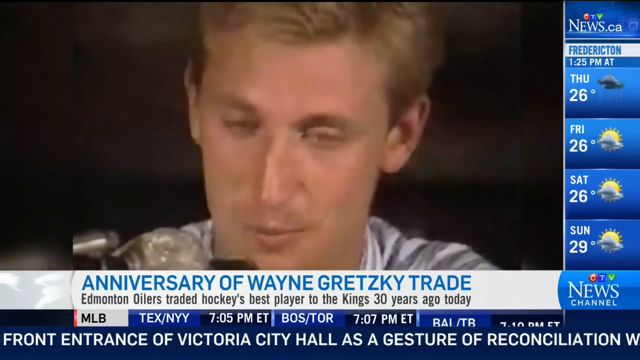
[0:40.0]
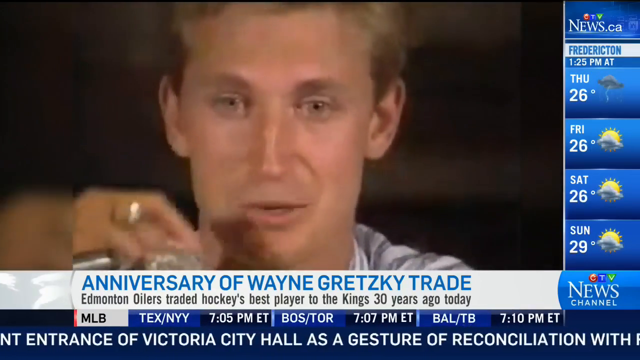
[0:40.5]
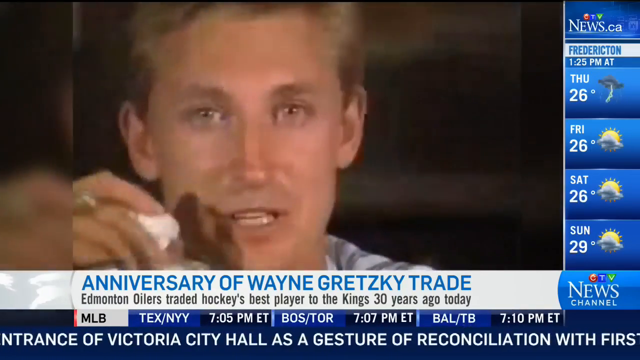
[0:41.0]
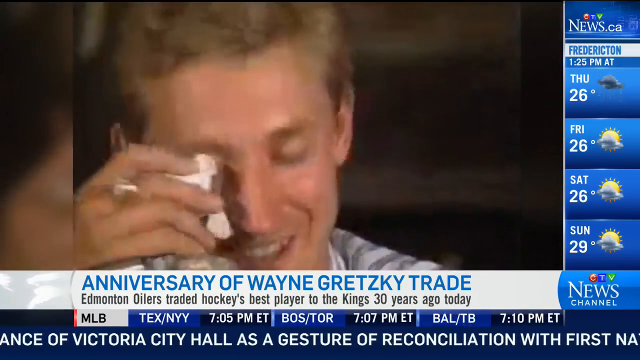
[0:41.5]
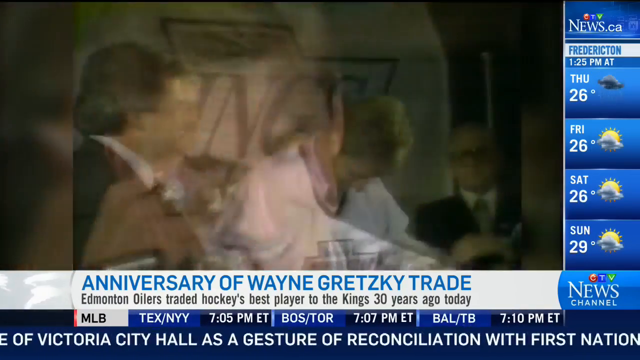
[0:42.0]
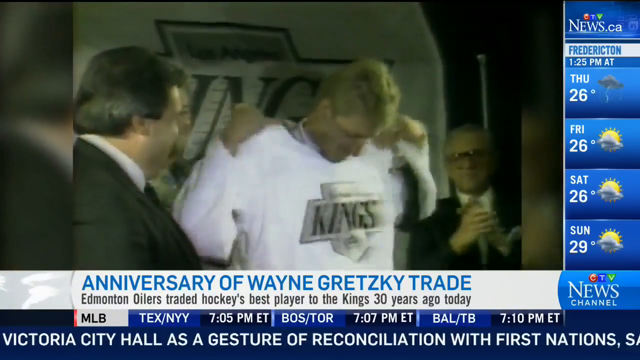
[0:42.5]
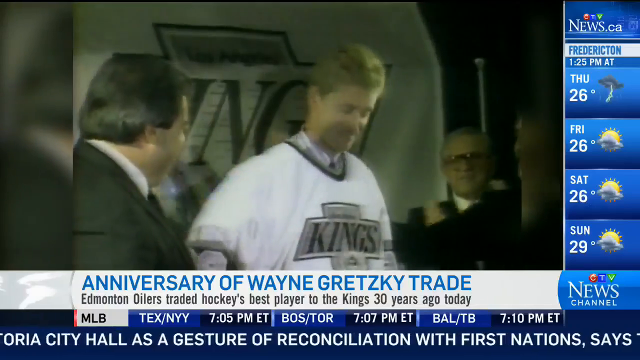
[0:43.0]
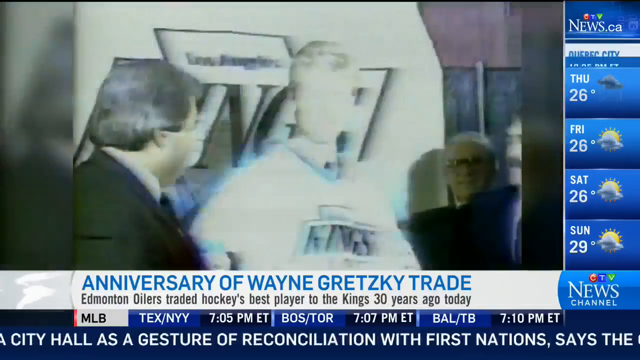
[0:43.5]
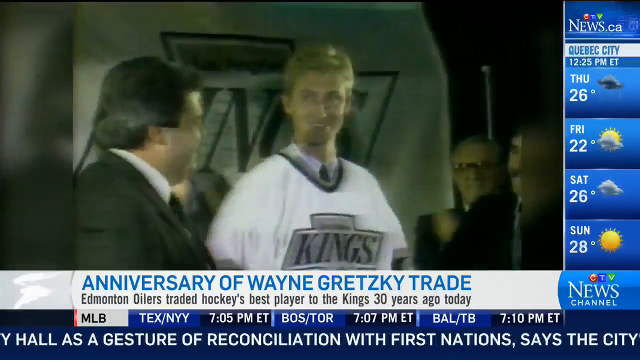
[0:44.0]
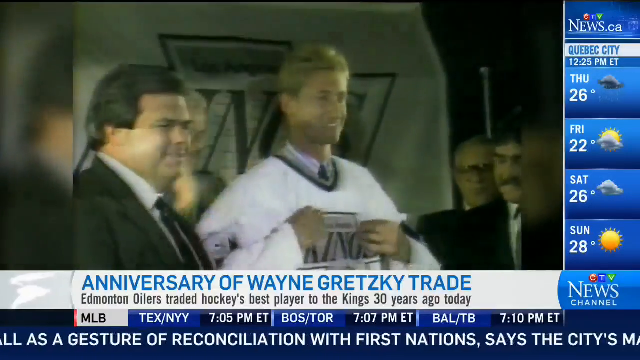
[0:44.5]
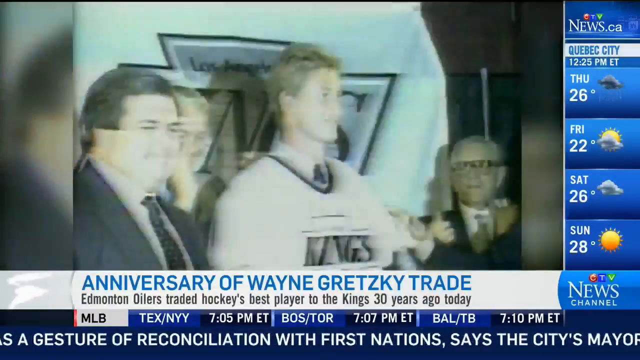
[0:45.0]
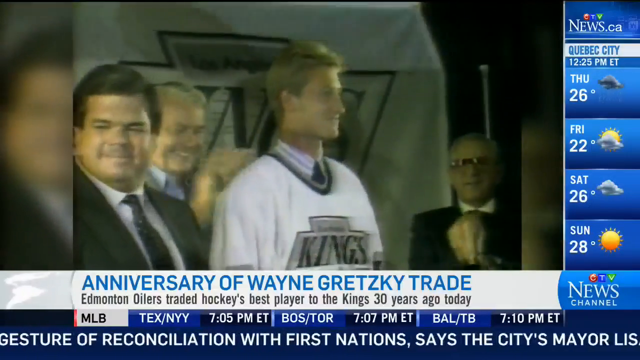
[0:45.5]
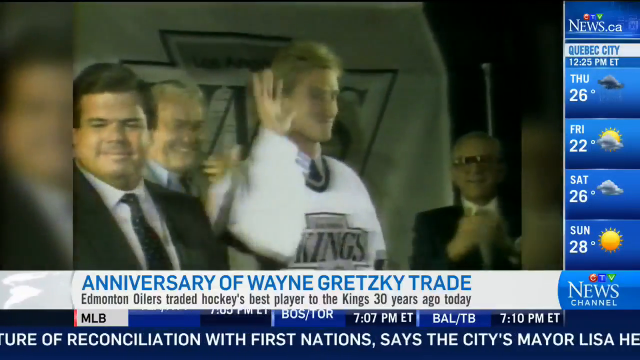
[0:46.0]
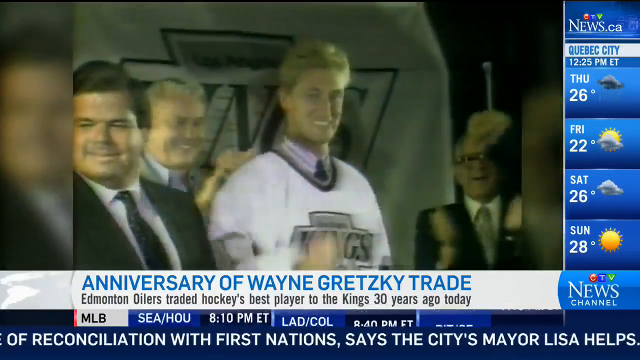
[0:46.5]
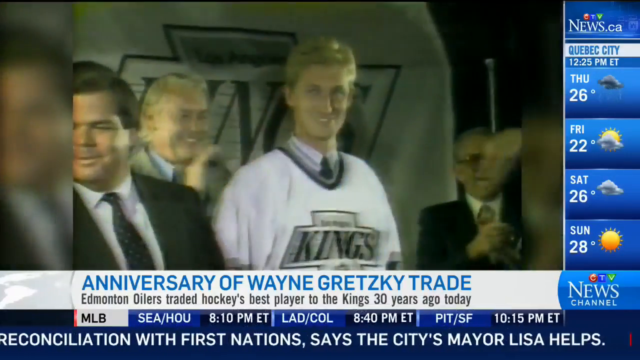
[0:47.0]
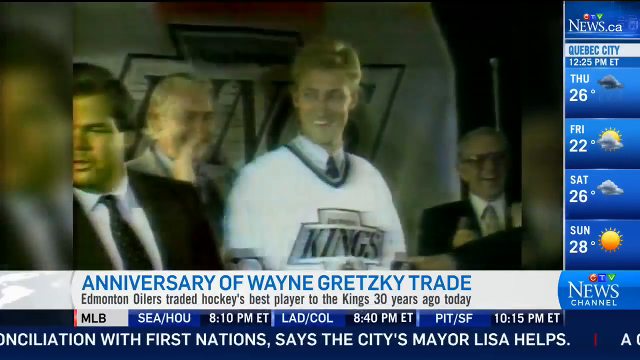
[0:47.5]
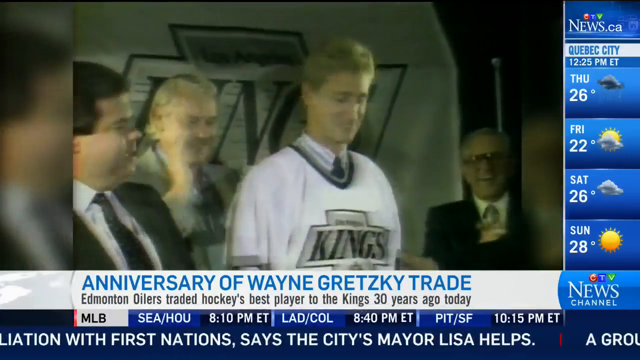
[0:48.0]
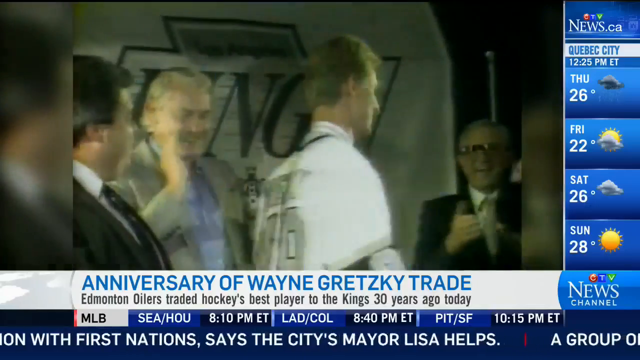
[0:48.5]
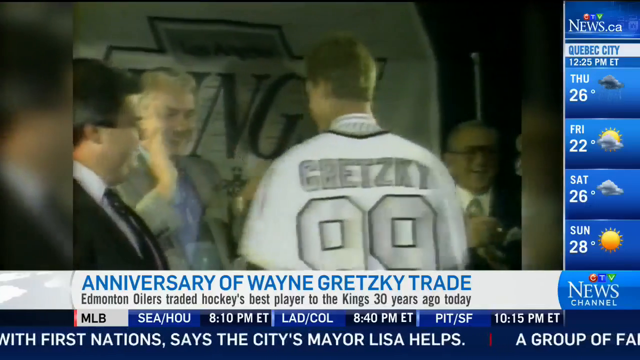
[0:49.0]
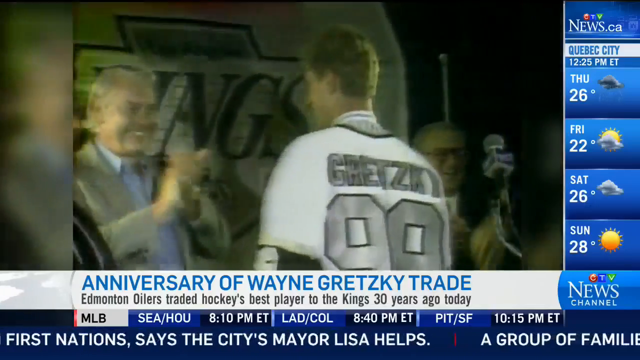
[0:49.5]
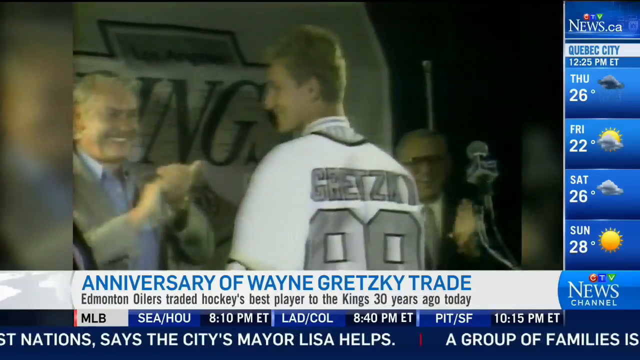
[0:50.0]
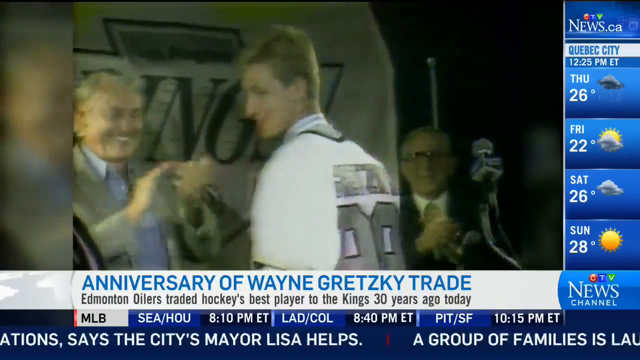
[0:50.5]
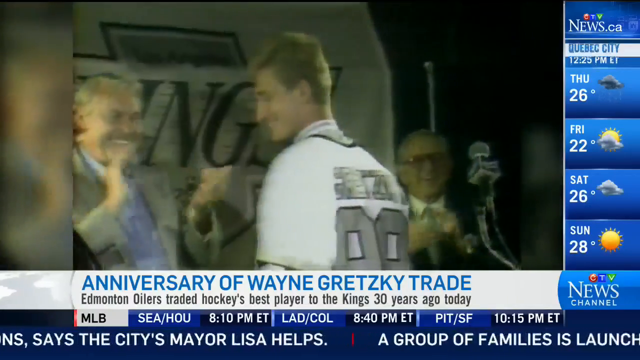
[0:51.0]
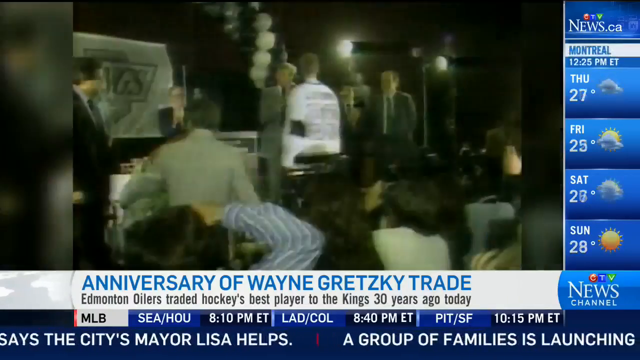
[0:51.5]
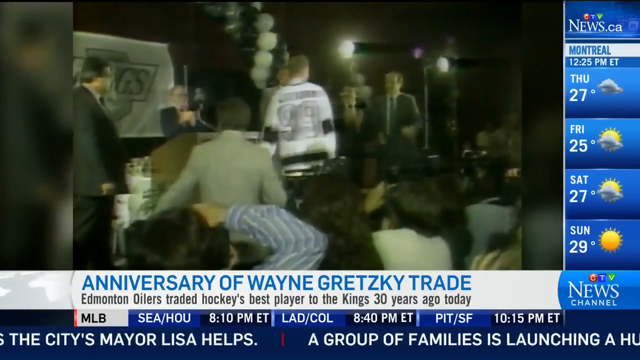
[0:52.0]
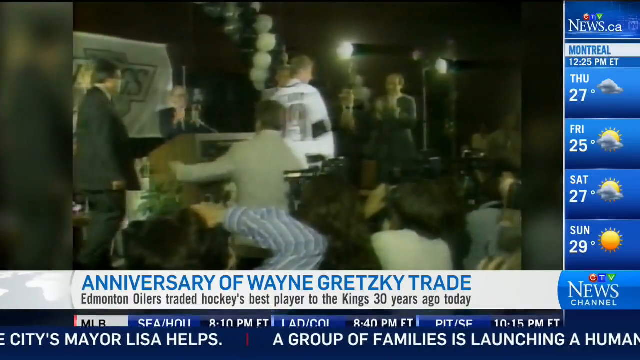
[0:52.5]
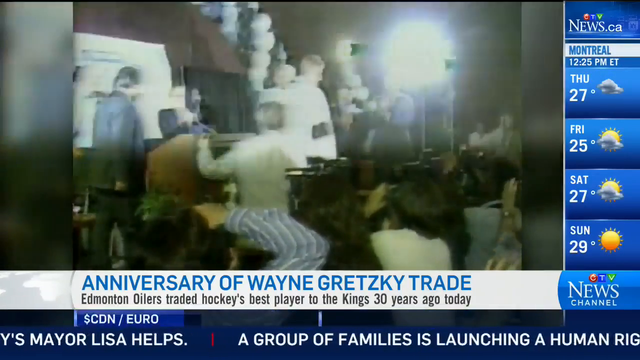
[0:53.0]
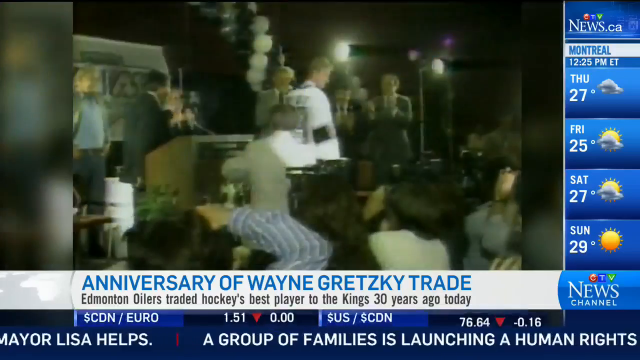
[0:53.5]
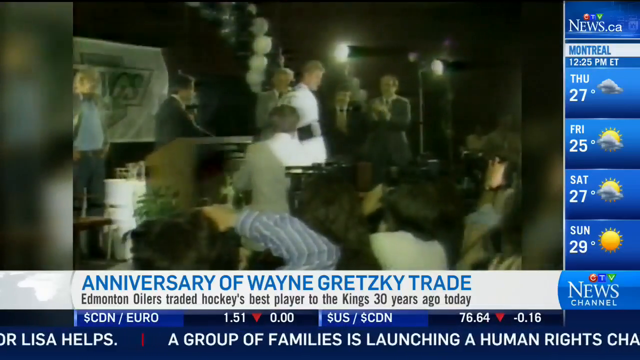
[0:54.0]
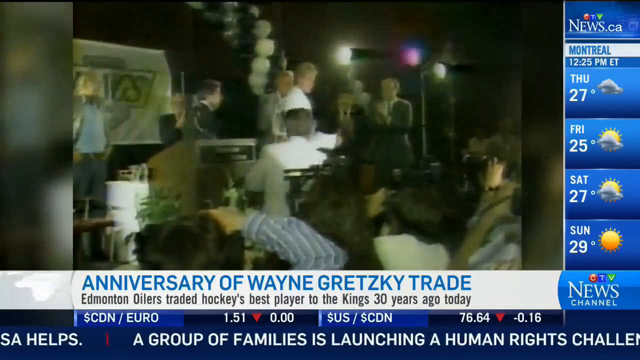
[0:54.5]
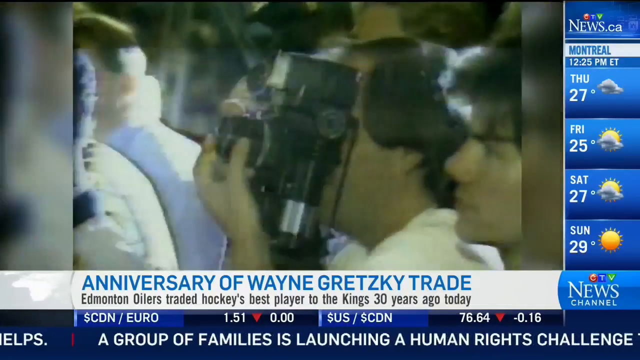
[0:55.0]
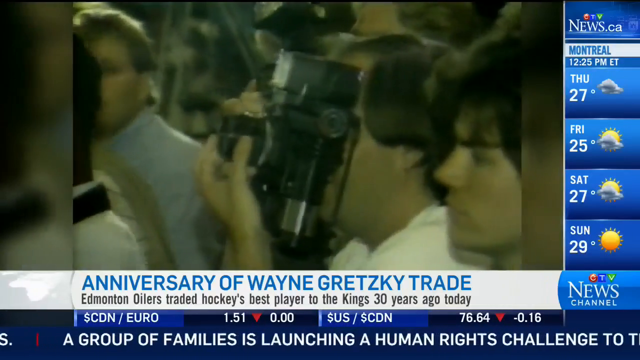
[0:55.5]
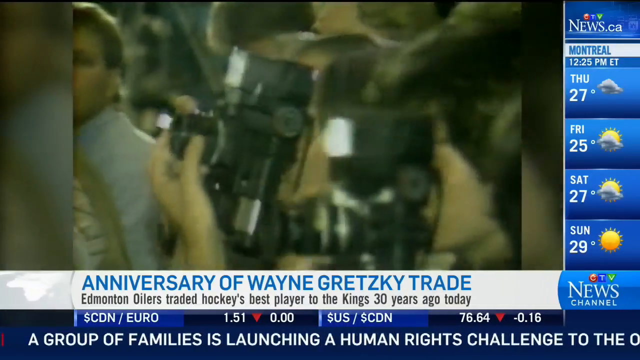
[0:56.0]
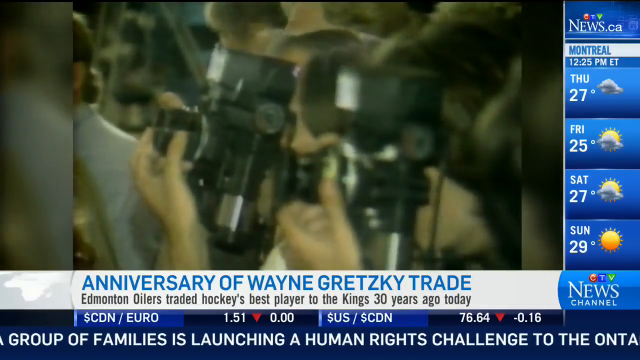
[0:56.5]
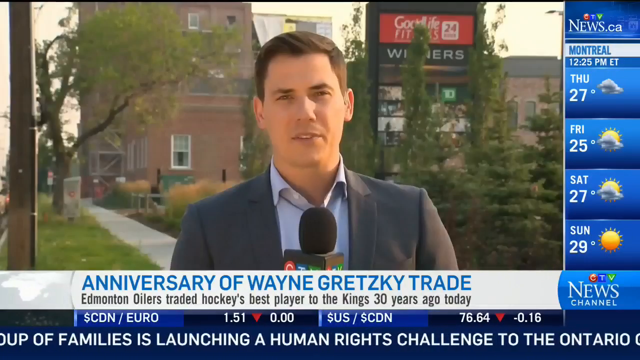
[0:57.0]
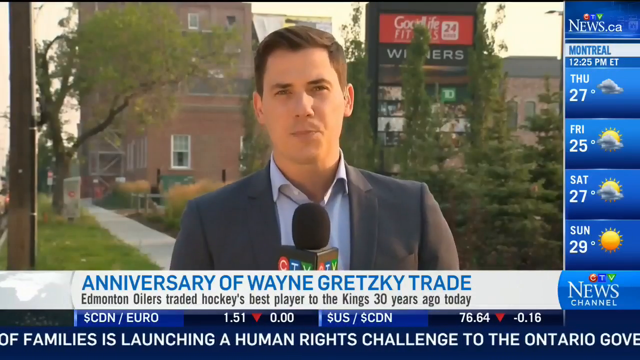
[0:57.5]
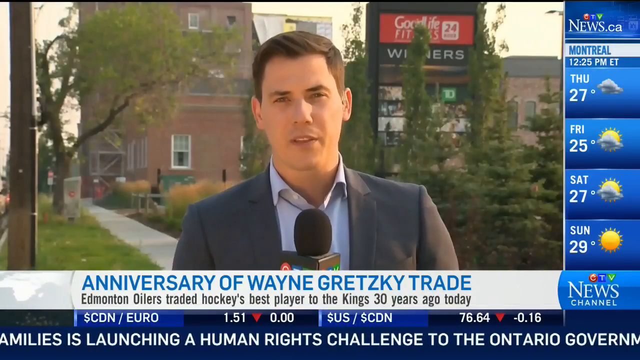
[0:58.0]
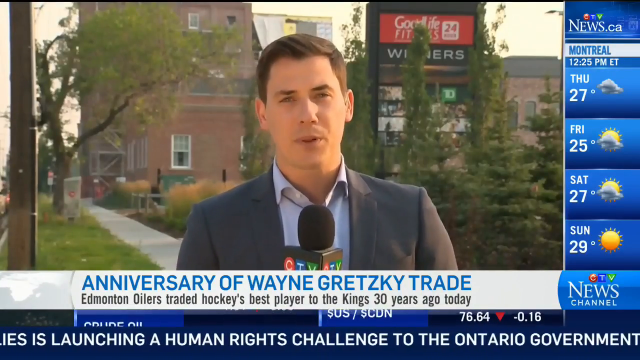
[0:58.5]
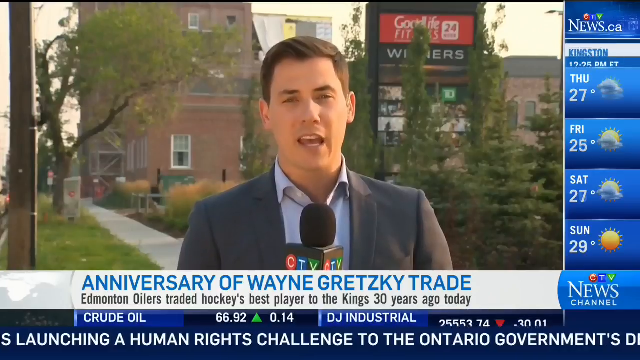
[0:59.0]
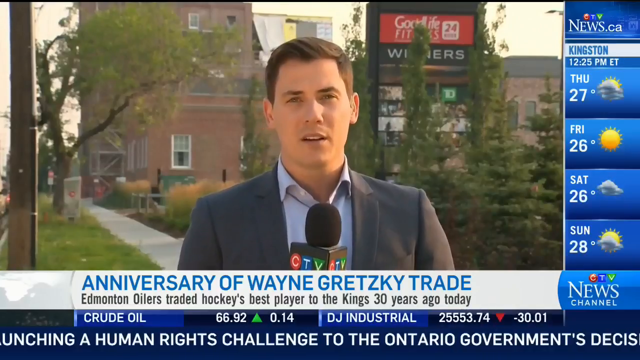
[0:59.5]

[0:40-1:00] The footage shows Wayne Gretzky looking very young, probably around 23 or 24. He holds a tissue and dabs with his right hand, and he has some kind of ring on his finger. He then stands and pulls the white Kings jersey over his head while a couple of guys, probably part of the organization, clap. Flashes go off, a banner is visible behind them, and one guy claps emphatically. Gretzky turns around to show the audience the back of the jersey, which says "Gretzky" in silver with a black outline and a huge "99" below it. The camera zooms out to show an almost black-and-white spiral arch structure over the press conference, with people sitting in the seats. There is a podium to the left, where a guy briefly holds out his left hand. The camera zooms in on some of the press taking pictures, then the video returns to the present-day correspondent standing in Edmonton.